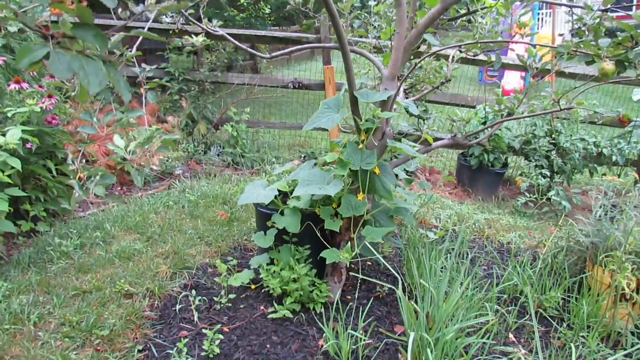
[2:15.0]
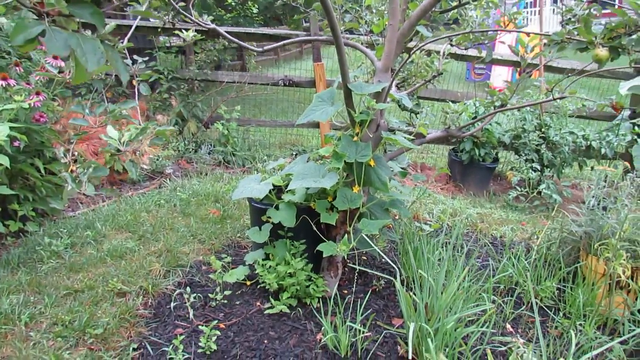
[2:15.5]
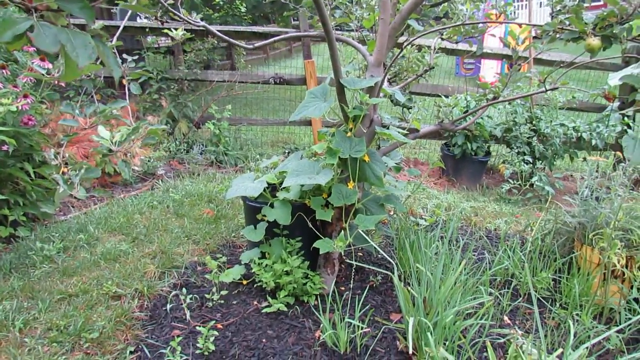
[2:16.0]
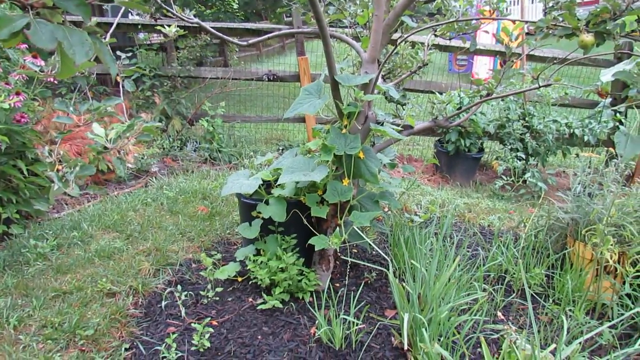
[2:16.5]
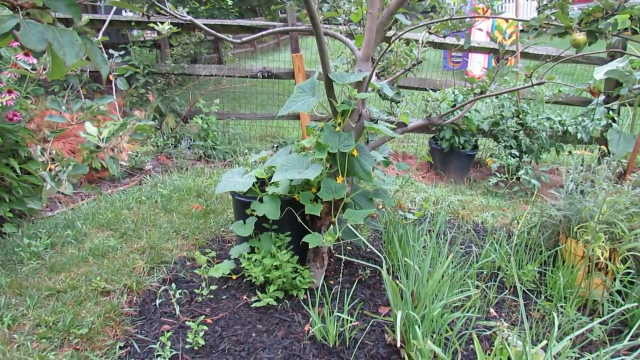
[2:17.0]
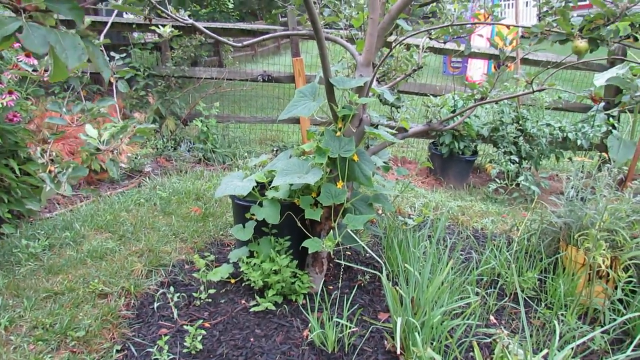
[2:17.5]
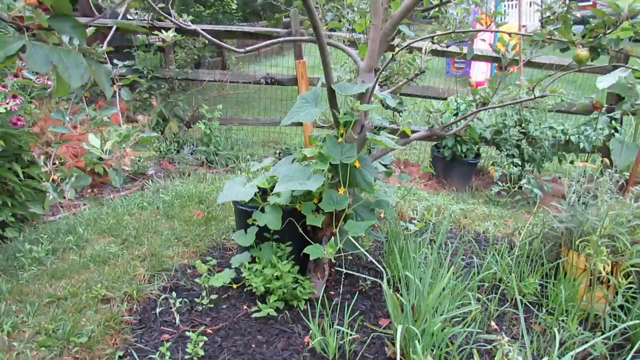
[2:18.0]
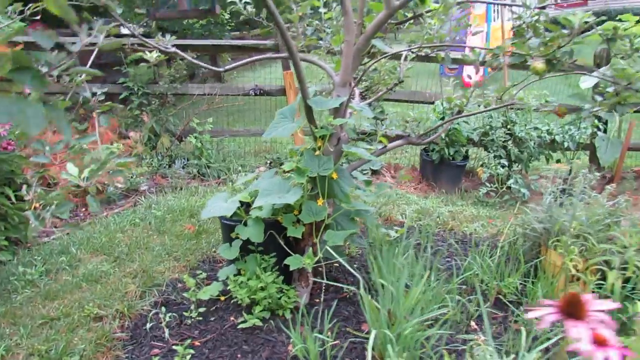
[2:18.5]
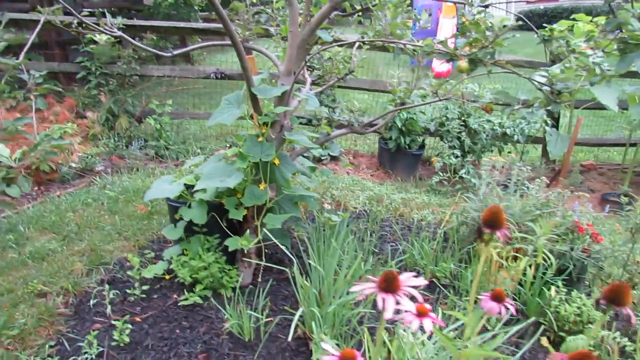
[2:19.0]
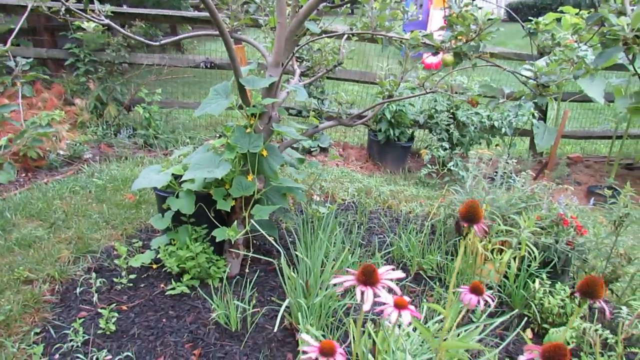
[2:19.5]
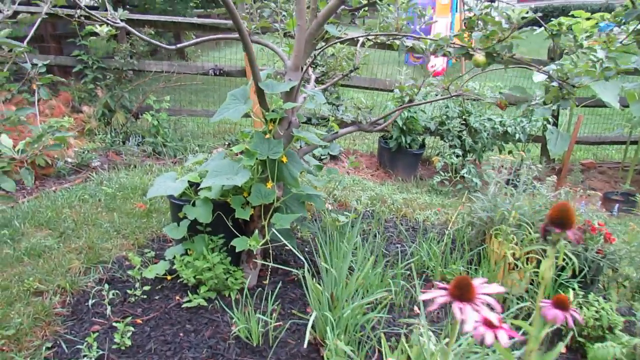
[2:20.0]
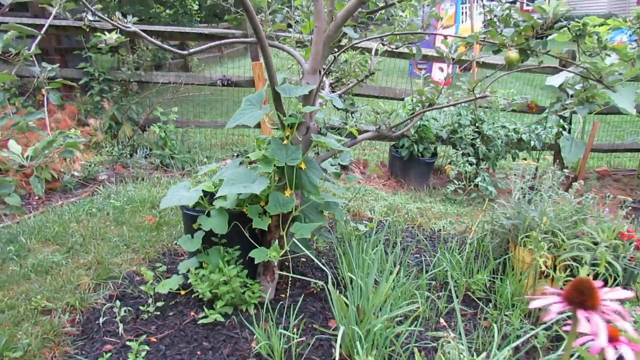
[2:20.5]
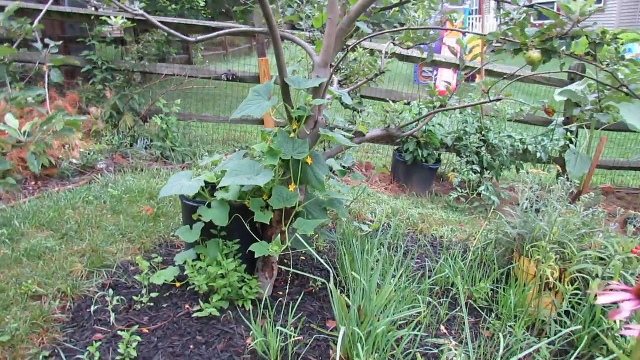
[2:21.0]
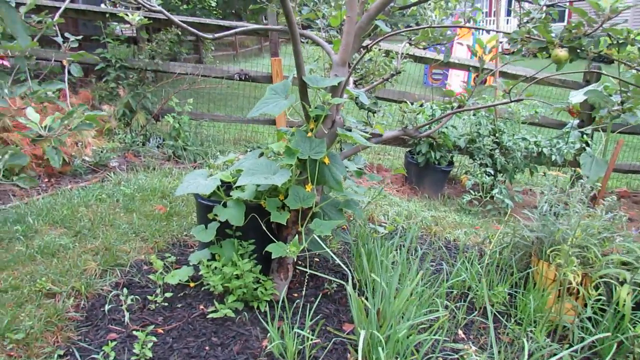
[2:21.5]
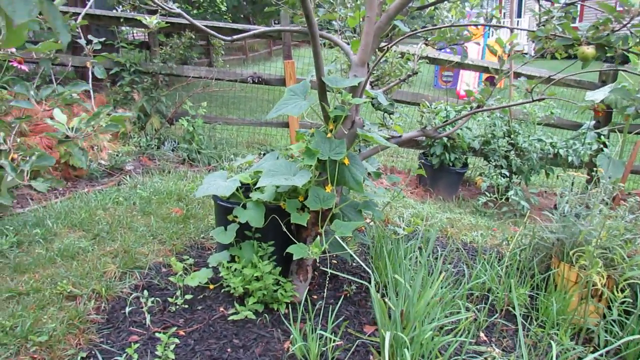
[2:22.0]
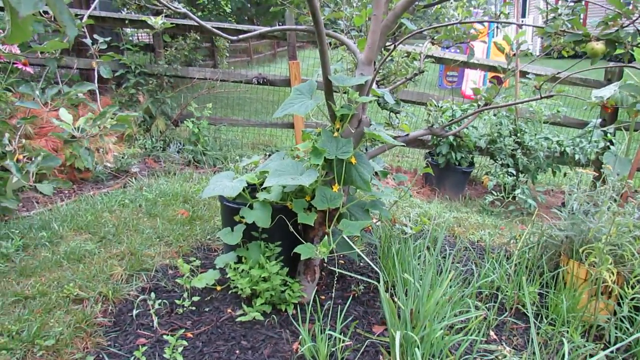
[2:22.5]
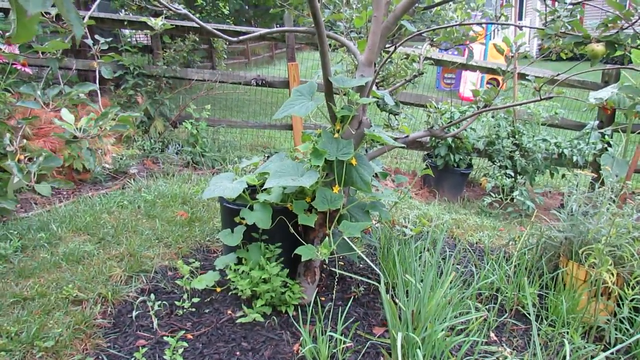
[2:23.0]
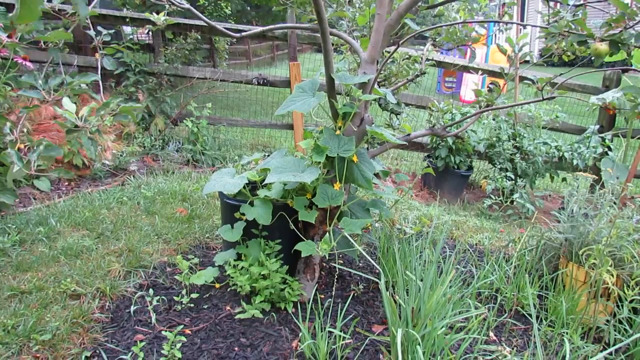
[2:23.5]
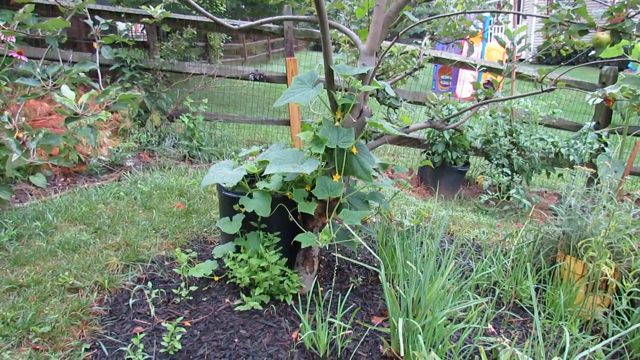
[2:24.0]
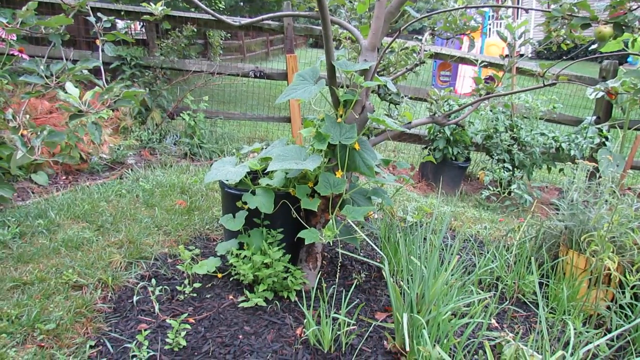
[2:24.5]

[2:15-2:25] A close-up shows the cucumber plant with green leaves and small yellow flowers growing upwards along the trunk of a tree, which it appears to use as a trellis. The plant looks healthy, with pretty green leaves. Dirt and wood chips are along the bottom. The tree is apparently a pear tree, with several branches growing outwards bearing sparse yellow and green, mostly green, leaves, and in the top right of the frame is what looks to be a green pear growing on it. In the background are some grass, other plants and a black pot with a plant growing inside it, and beyond is the wooden fence separating the two properties and the neighbor's house, which has the same grass, leaves and trees, plus a plastic play structure.